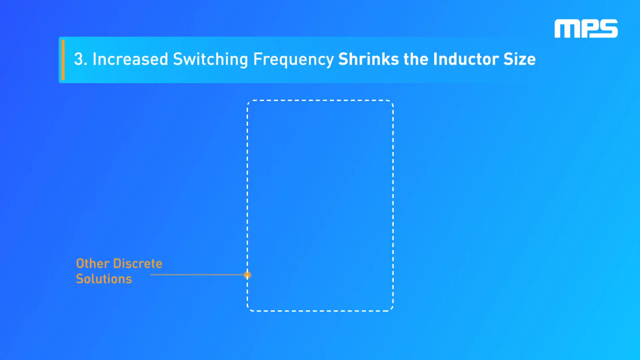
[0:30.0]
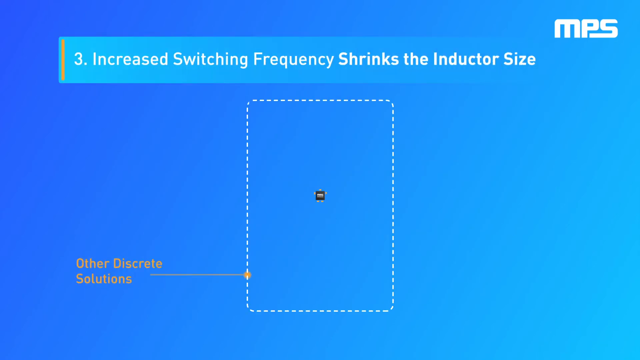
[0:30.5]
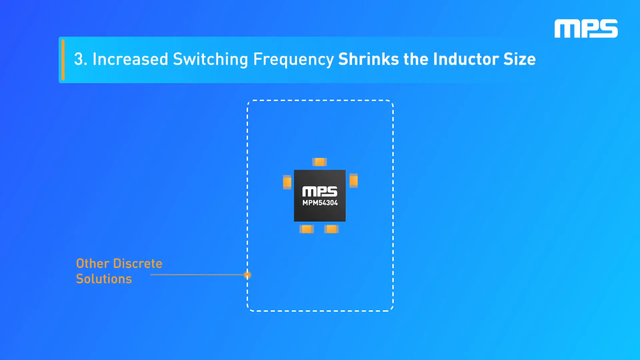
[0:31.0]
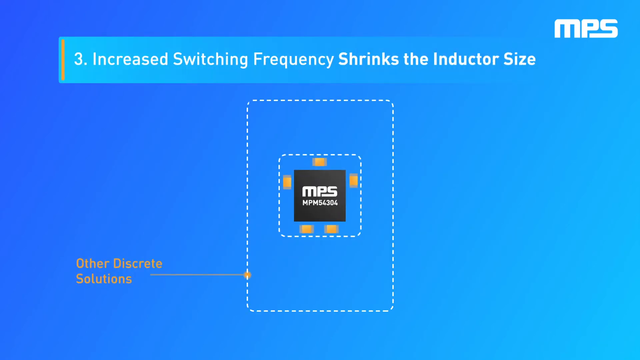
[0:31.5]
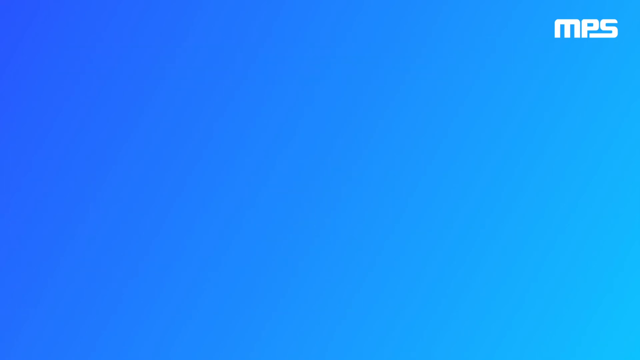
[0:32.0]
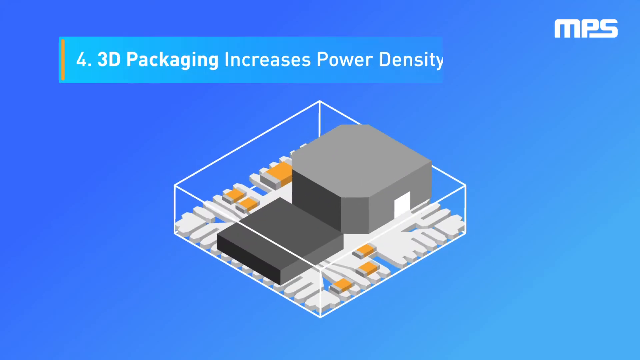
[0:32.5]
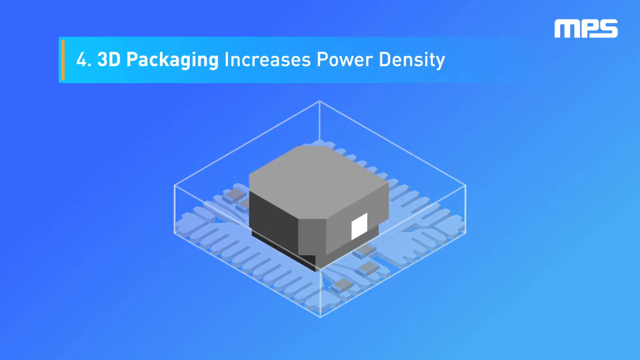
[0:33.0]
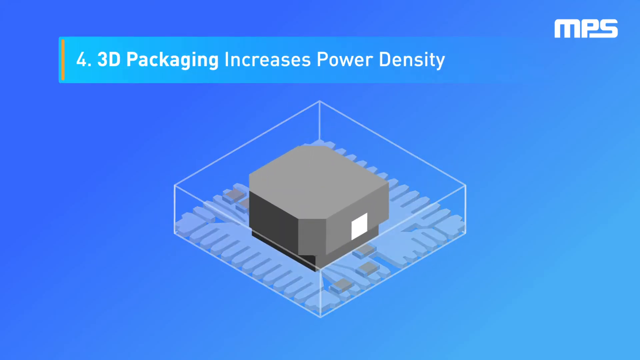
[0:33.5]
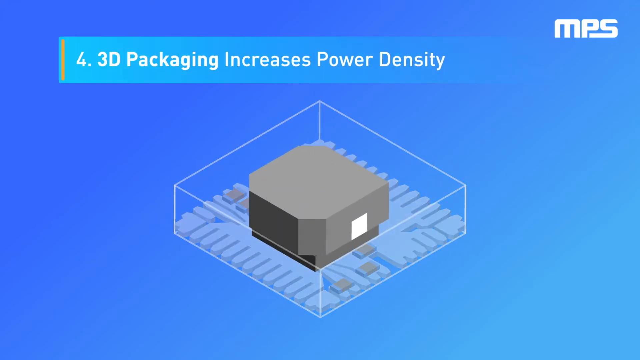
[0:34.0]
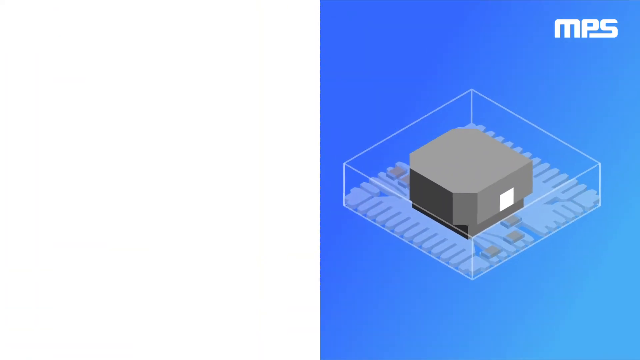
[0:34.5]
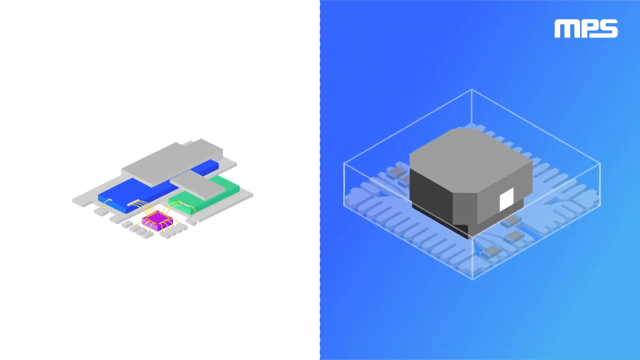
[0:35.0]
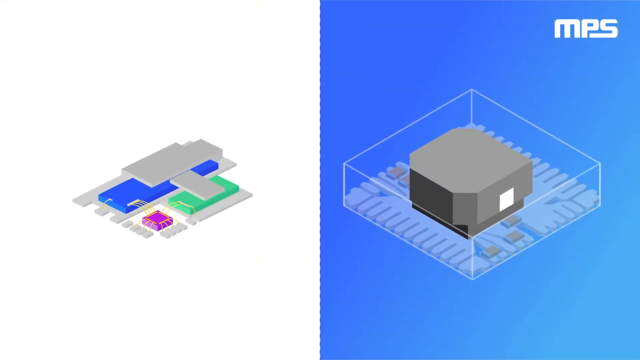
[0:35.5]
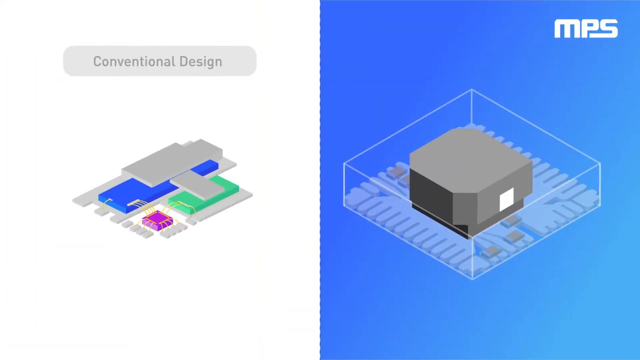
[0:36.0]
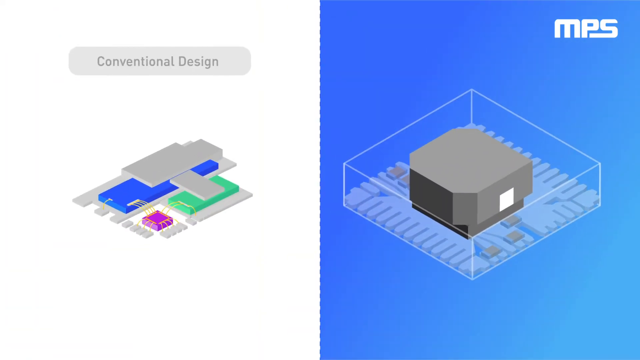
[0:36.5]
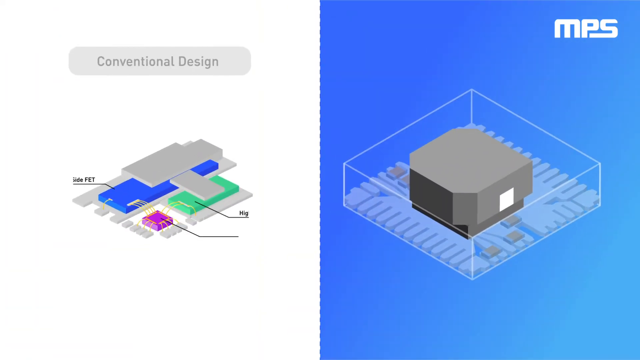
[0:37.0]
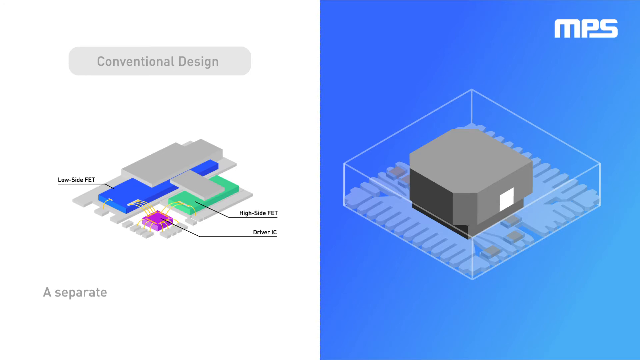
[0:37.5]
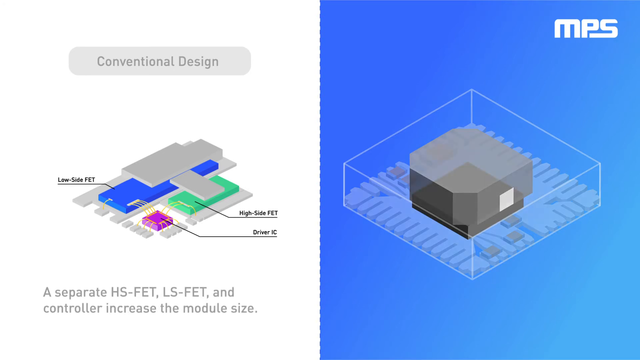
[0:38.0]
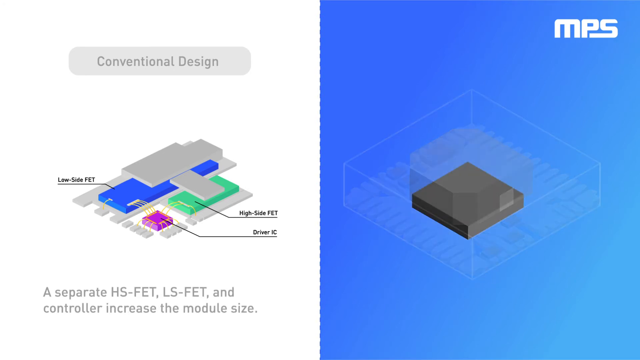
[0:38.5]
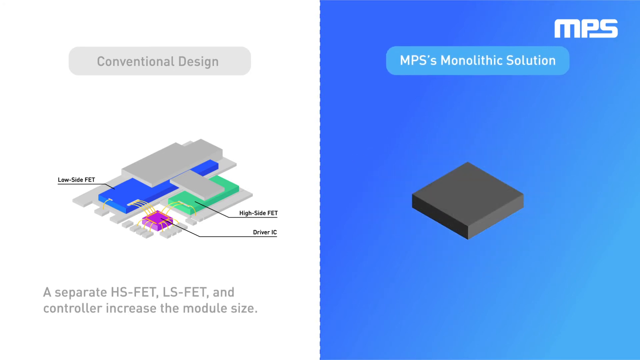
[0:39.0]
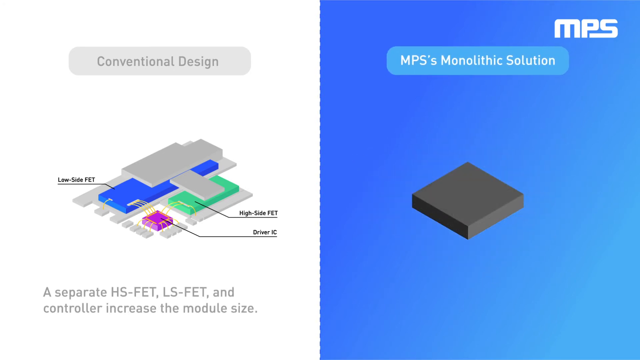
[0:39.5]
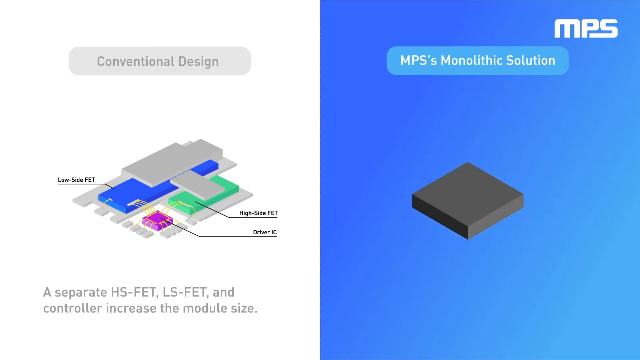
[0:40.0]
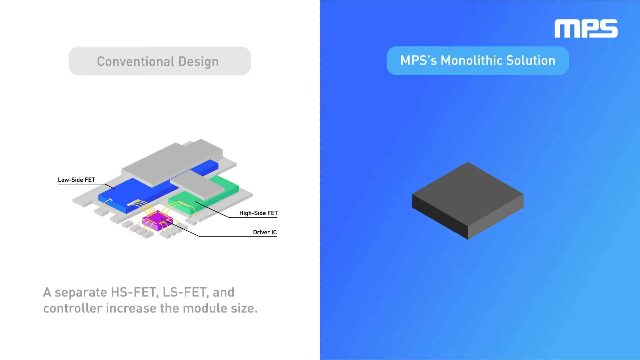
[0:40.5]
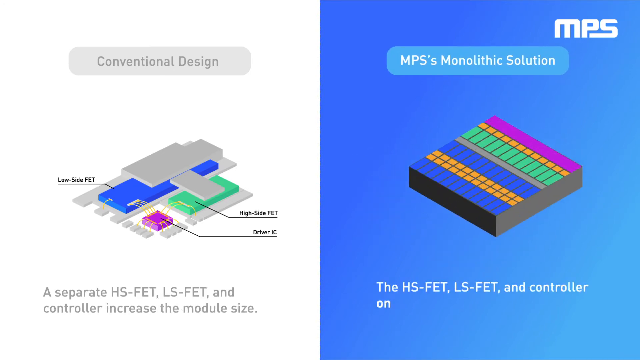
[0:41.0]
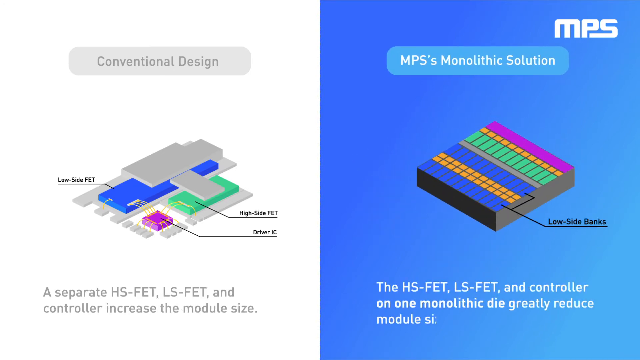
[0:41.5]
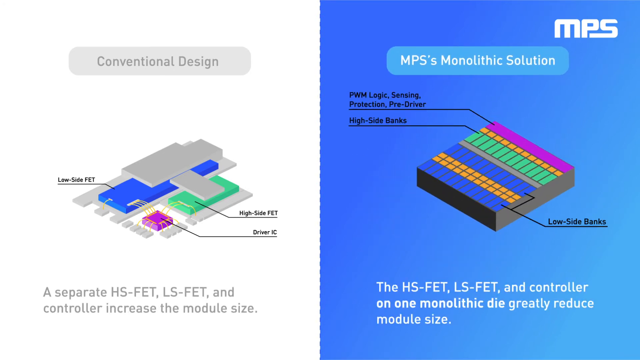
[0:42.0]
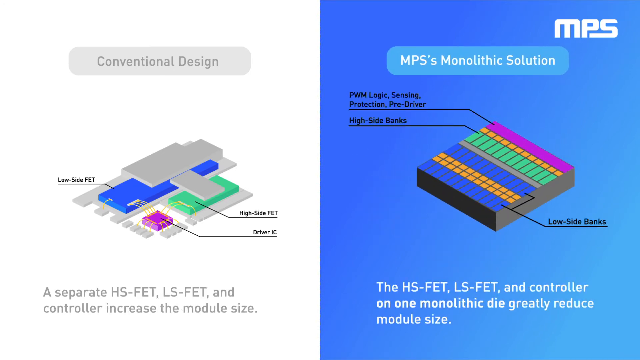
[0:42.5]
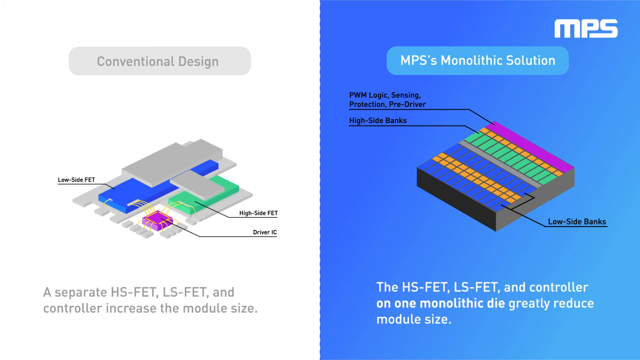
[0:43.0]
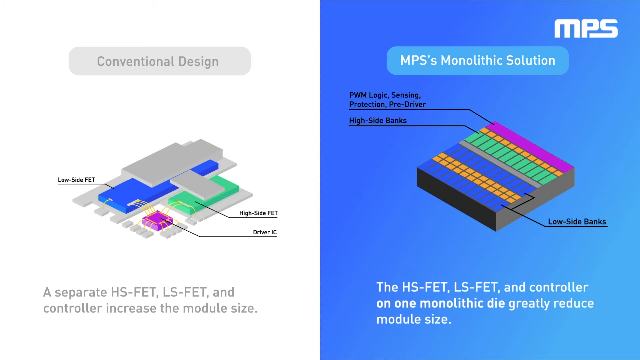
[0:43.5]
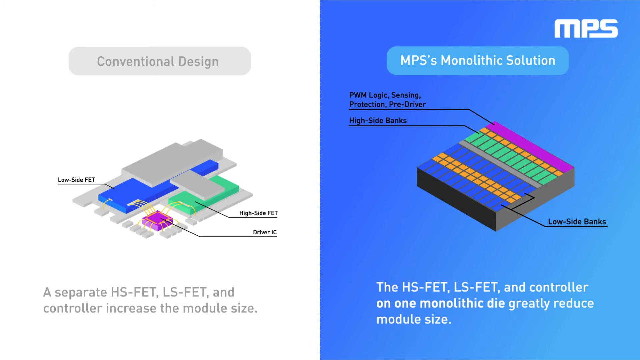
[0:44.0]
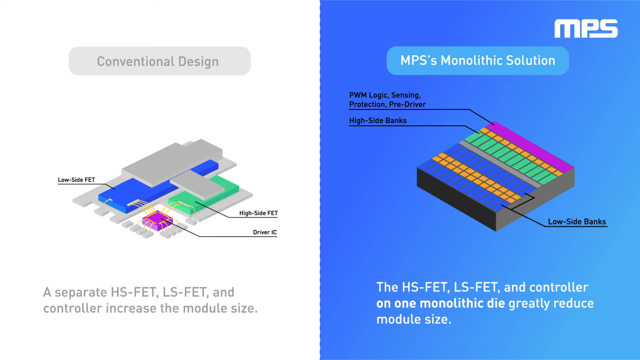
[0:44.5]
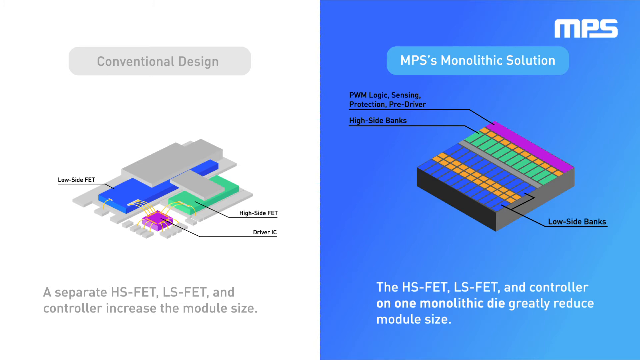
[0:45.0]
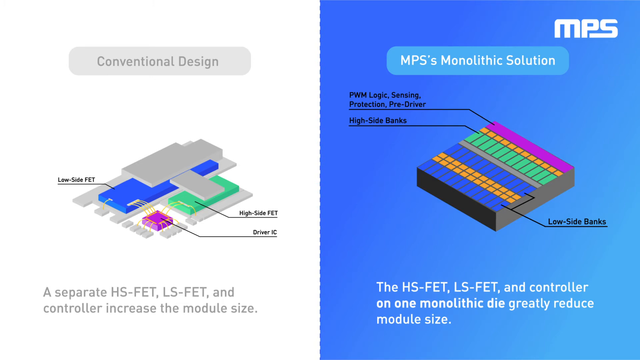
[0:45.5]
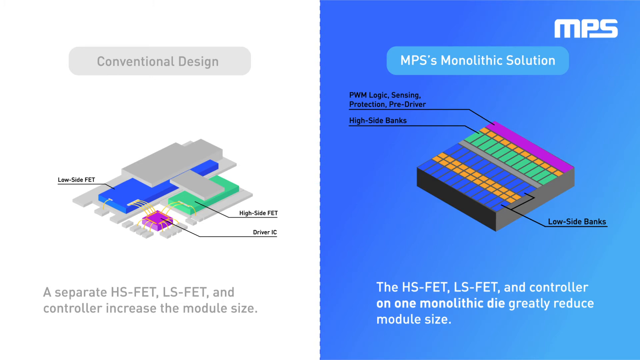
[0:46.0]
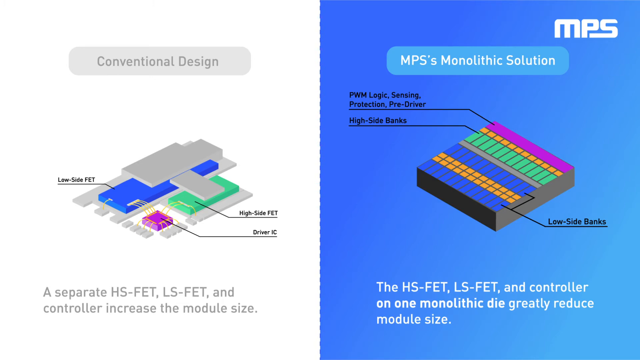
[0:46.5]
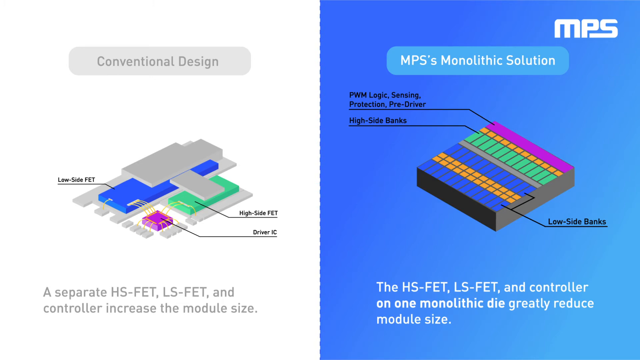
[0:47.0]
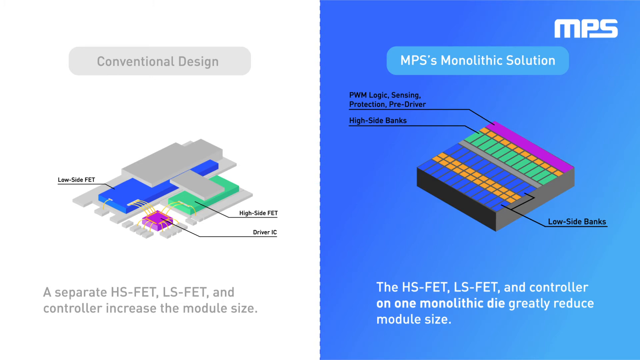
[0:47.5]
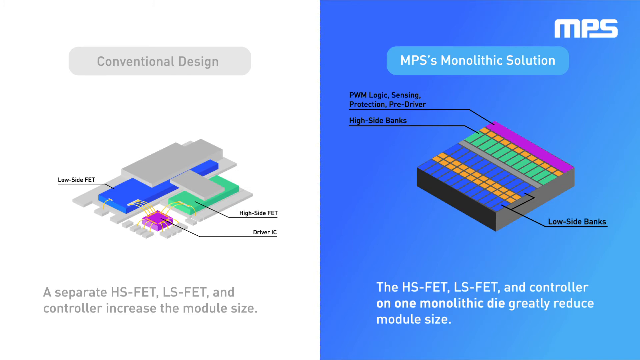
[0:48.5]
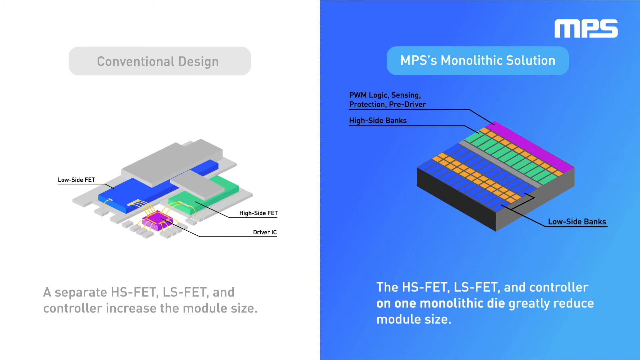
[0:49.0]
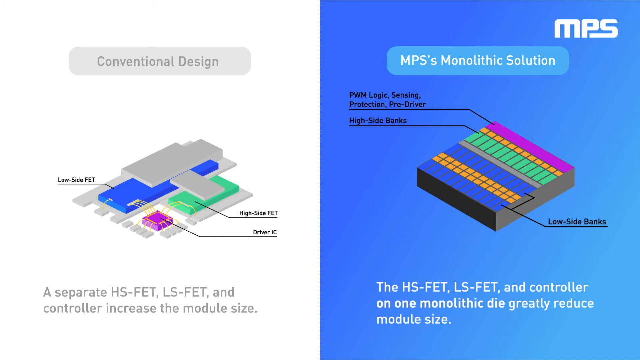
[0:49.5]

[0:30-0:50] The video continues through the list of advantages of using the structure, covering the inductor being smaller, reducing area overhead, silicon area, and power density, with much of it about the structure being more compact. Each item has a small animated diagram illustration on the dark blue background illustrating the advantage being described. The see-through structure then moves to the right side of the screen, still with its blue background. On the left side, on a white background, a gray chip structure is shown with a label above it that says "conventional design". On the right side, a label above the image refers to the MPS monolithic solution. Each image has a small text description appearing underneath it explaining the differences in size and what they mean. The one on the left, not made by MPS, has a kind of white and gray, quite dull color scheme, while the one on the right has a bright blue background with white text over it. The illustrations are animated to show the differences.